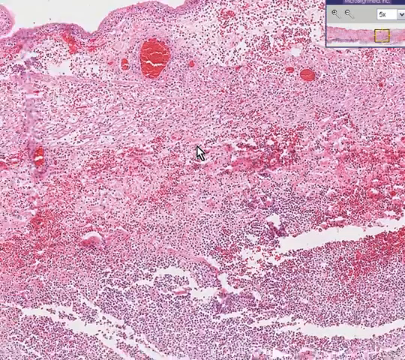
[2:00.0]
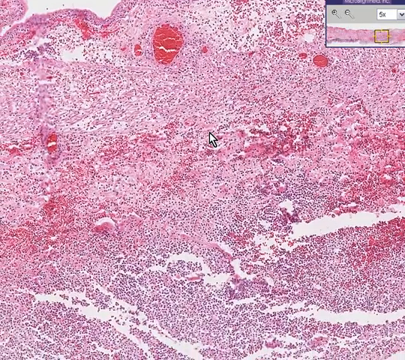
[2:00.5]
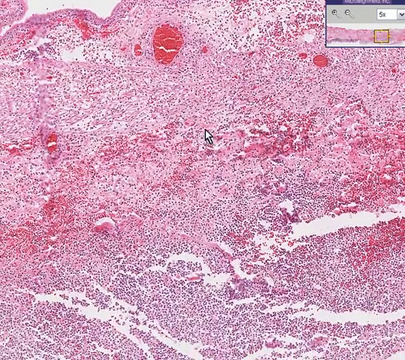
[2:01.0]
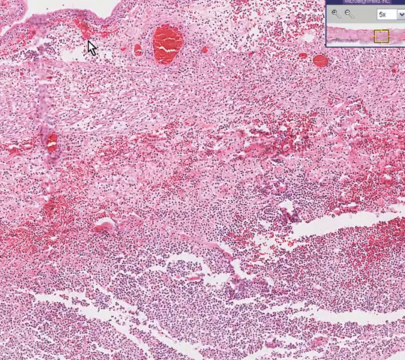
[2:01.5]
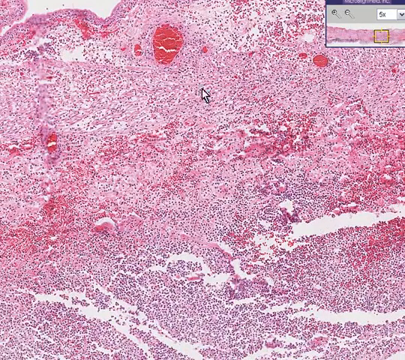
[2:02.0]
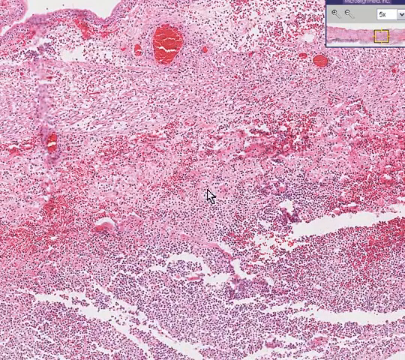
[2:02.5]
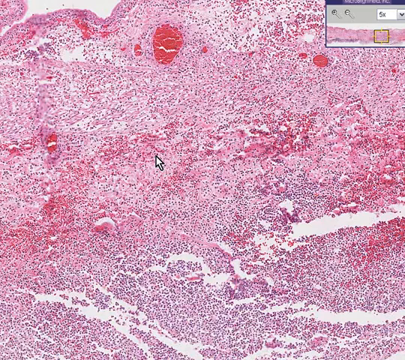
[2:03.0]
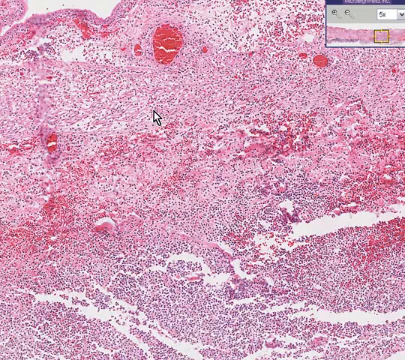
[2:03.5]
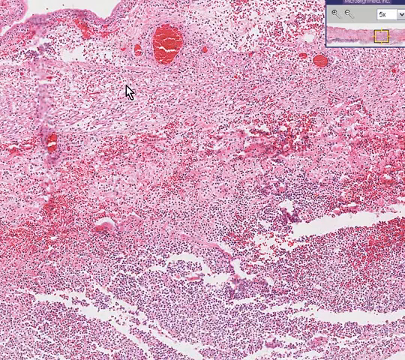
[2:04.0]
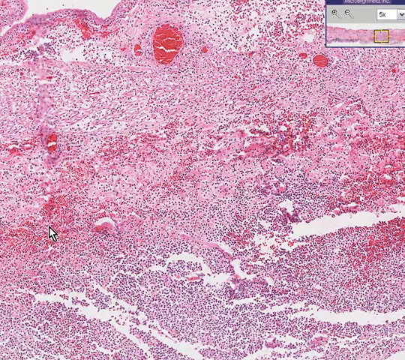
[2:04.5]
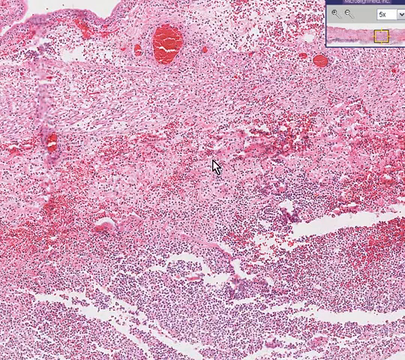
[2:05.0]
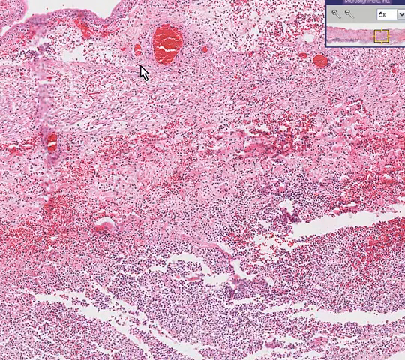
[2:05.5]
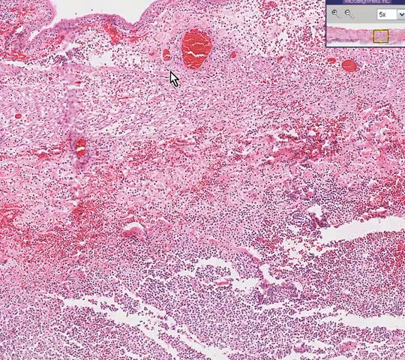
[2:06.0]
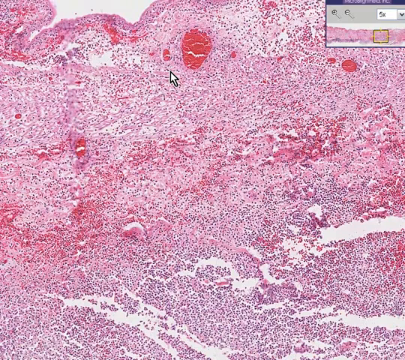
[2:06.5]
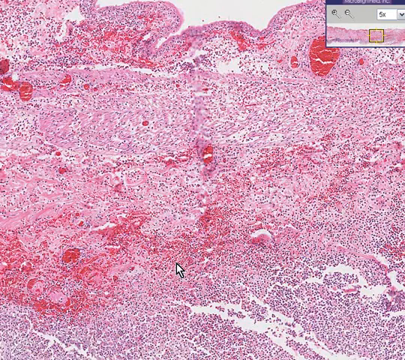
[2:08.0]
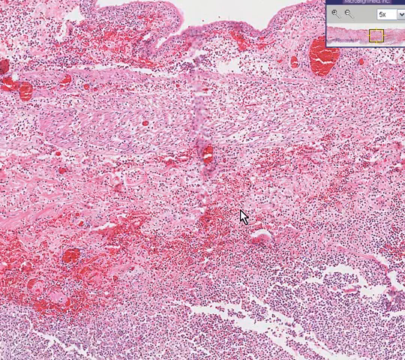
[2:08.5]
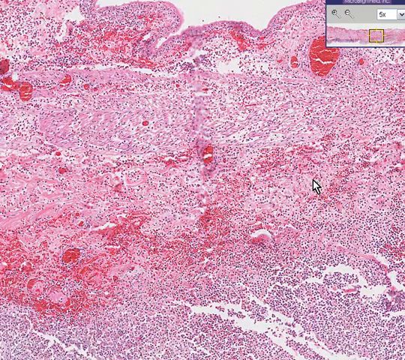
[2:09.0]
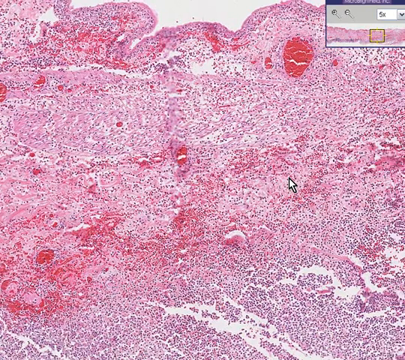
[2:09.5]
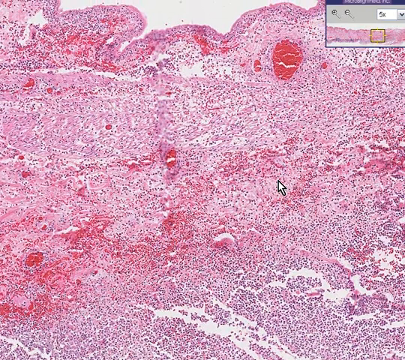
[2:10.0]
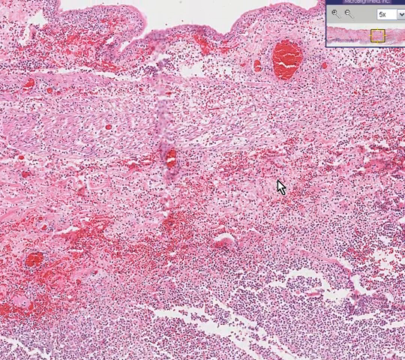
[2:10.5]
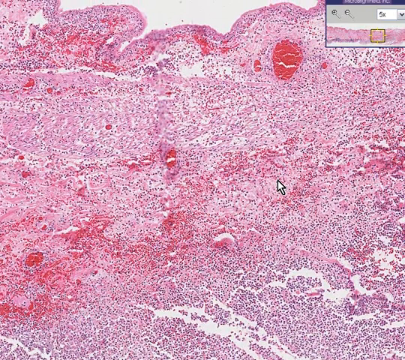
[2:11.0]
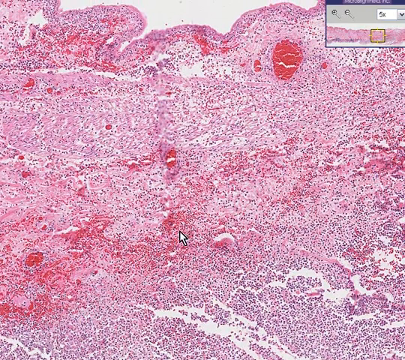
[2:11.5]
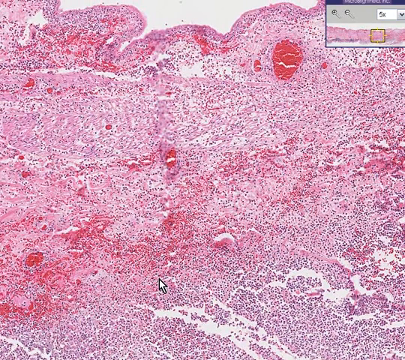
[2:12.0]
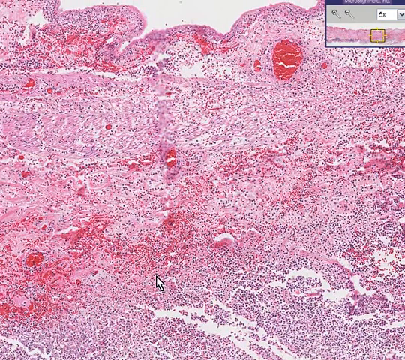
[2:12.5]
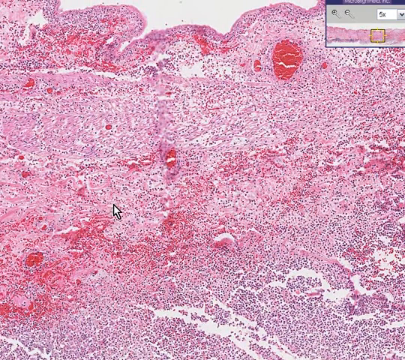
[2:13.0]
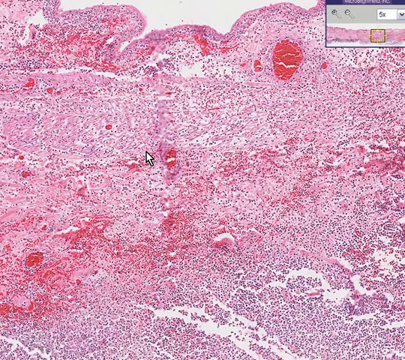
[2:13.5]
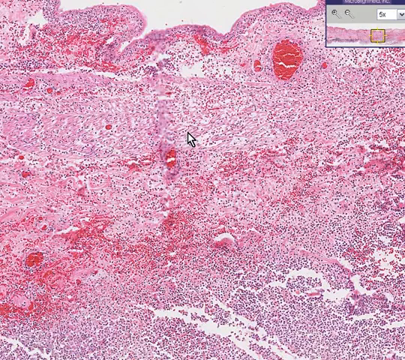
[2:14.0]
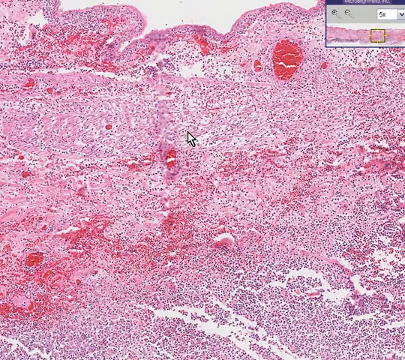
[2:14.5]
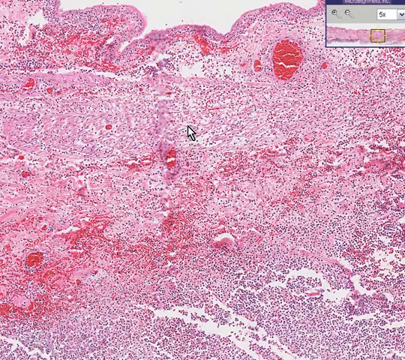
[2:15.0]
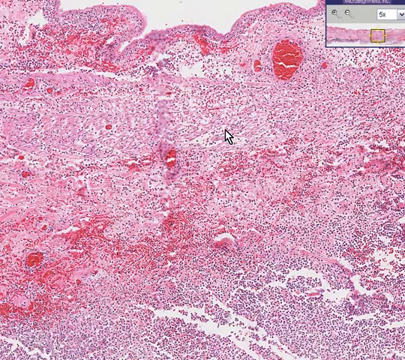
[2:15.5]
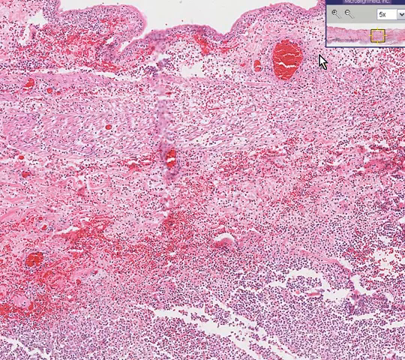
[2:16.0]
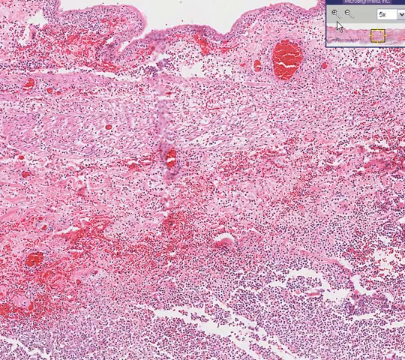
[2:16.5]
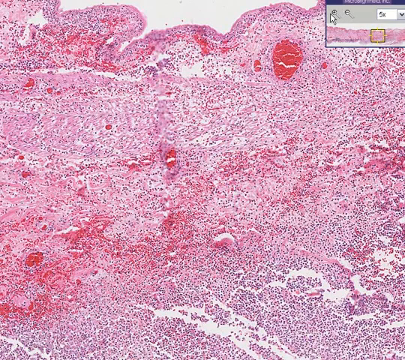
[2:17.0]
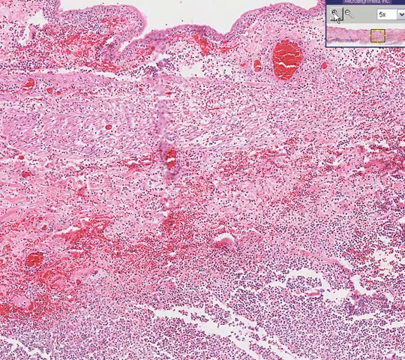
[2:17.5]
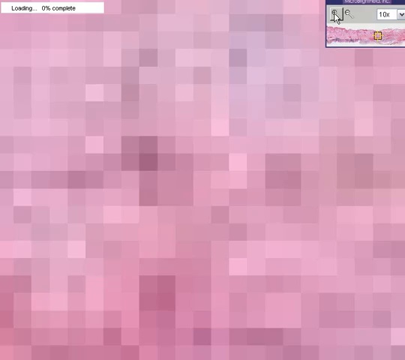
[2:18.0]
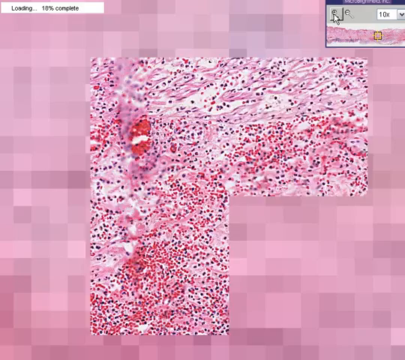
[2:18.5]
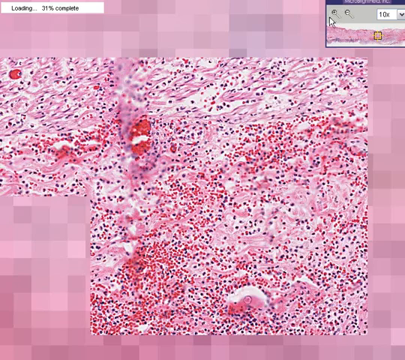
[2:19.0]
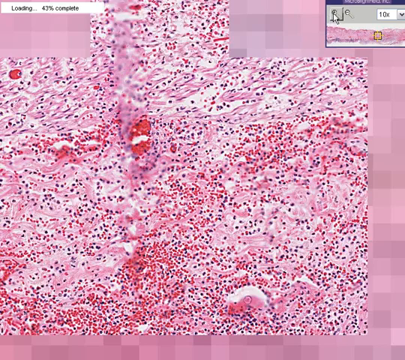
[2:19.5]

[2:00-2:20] What looks like a slice of tissue under a microscope sort of resembles a river flowing. It is pink and purple with lots of white lines running through it. It appears to be on a computer, since at the top right of the screen a smaller box shows the same image and reads "5x". The mouse arrow moves up to an area of the image and makes a little circle, as if the person is trying to explain something. It then scrolls the image to the right a little and points around at different areas, then goes up to the little box and clicks enlarge. An enlarged version of the image appears on the main screen, and then it goes back to a smaller version.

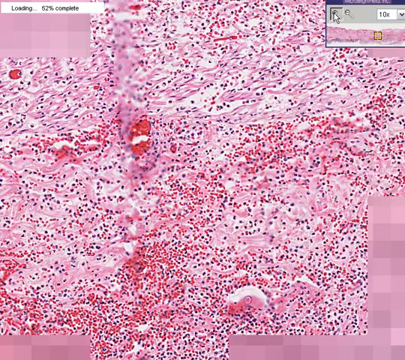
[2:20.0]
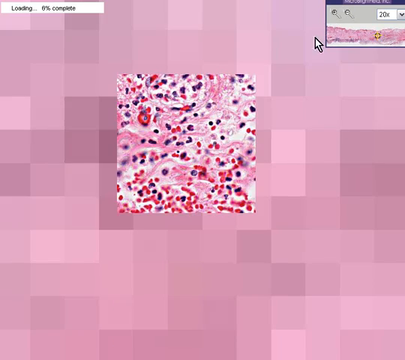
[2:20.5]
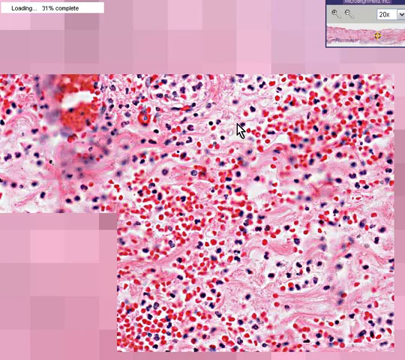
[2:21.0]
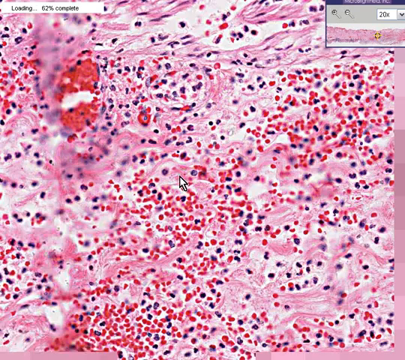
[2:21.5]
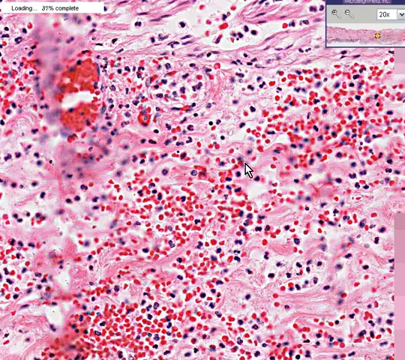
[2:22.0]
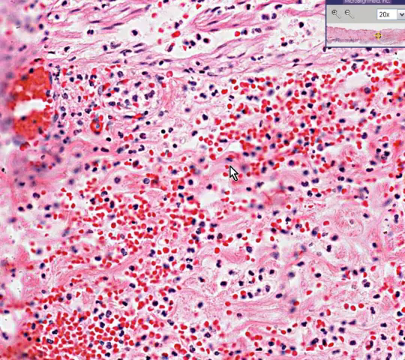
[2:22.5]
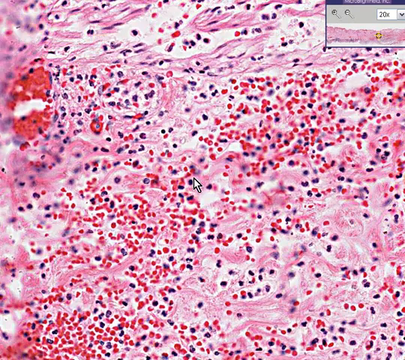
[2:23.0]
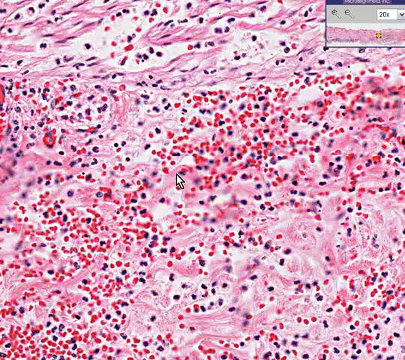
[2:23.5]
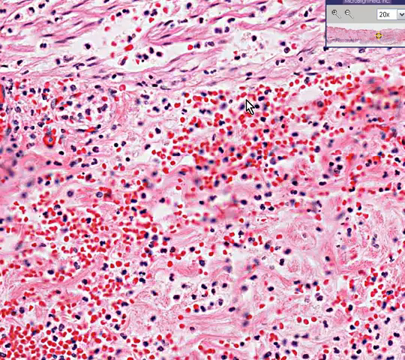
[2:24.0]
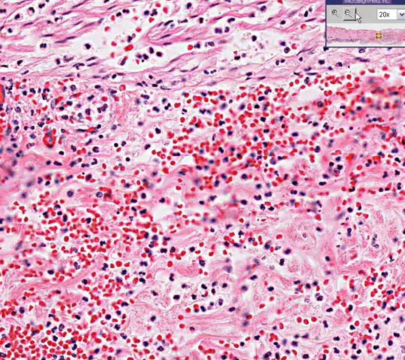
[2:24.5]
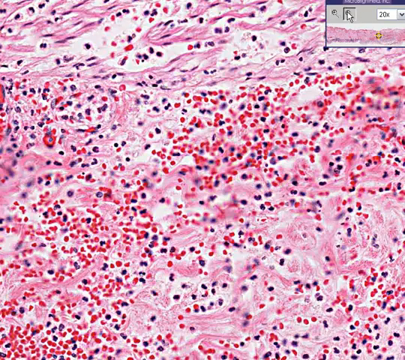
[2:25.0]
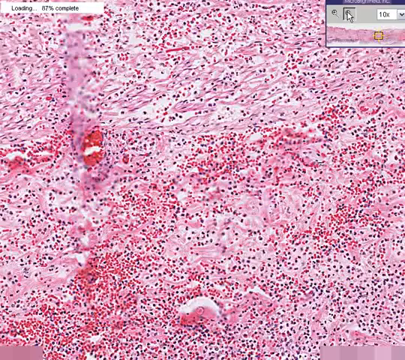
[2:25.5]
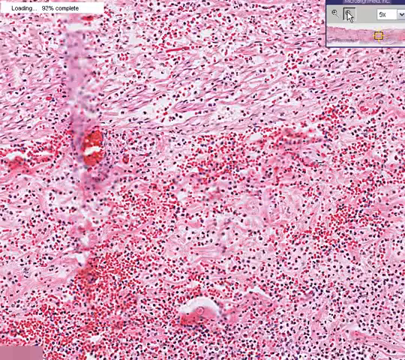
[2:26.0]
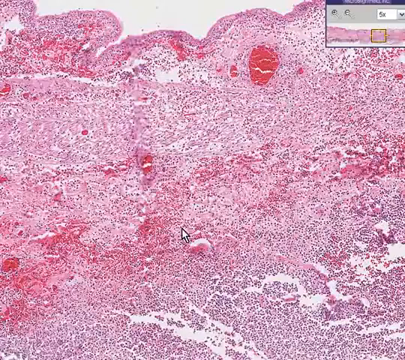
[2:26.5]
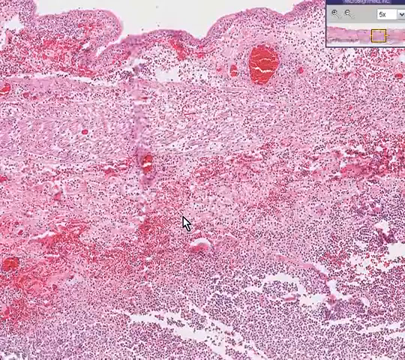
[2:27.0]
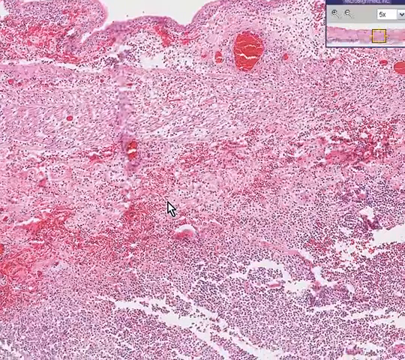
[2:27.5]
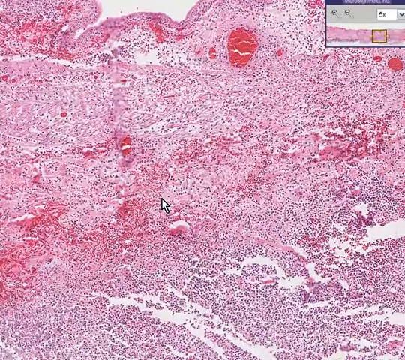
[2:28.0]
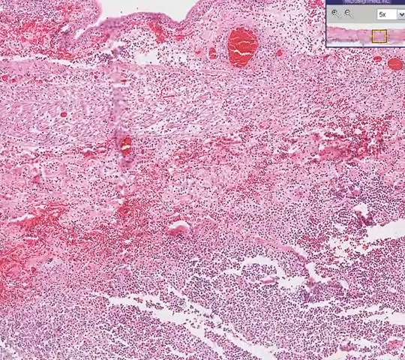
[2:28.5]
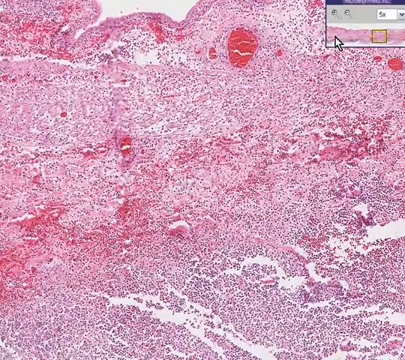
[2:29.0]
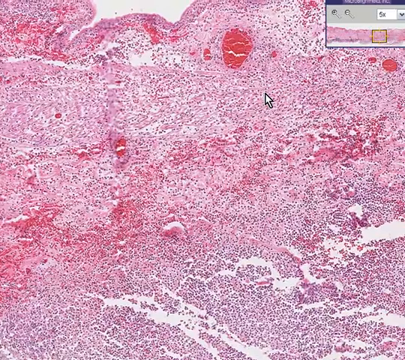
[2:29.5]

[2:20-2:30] A pink and purple screen has many small purple and dark pink or red dots all over the top of the image. A smaller box is at the top right; this is on a computer, and the image is zoomed in. The mouse arrow moves up and clicks on the box, making the image zoom out, and then moves the image to the right a little. Zoomed out, the image has many larger dark pink or red dots or circular areas and many white lines running through it, sort of like rivers running through a delta seen from space. The video ends there.